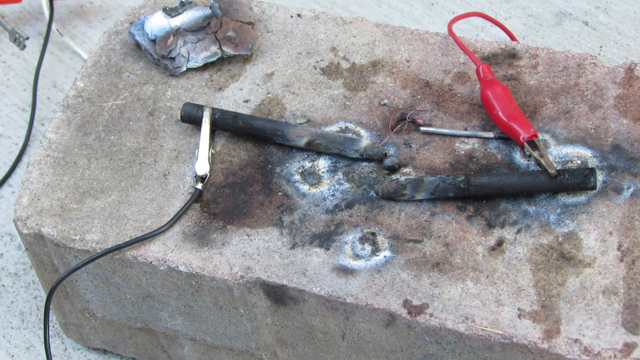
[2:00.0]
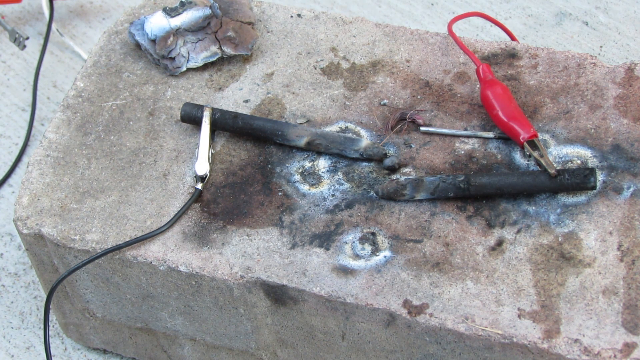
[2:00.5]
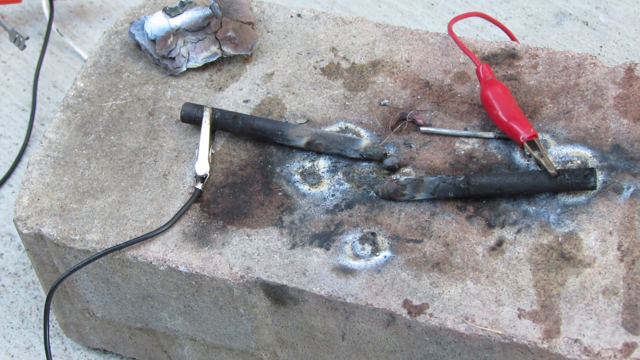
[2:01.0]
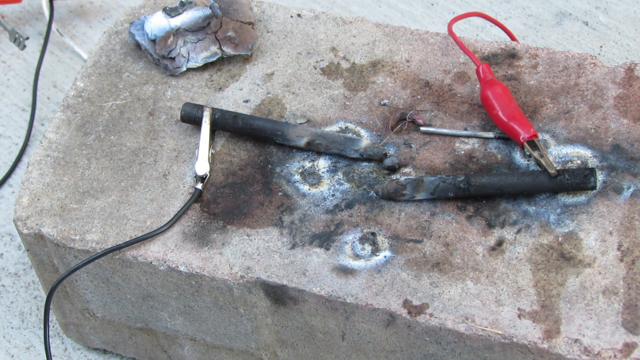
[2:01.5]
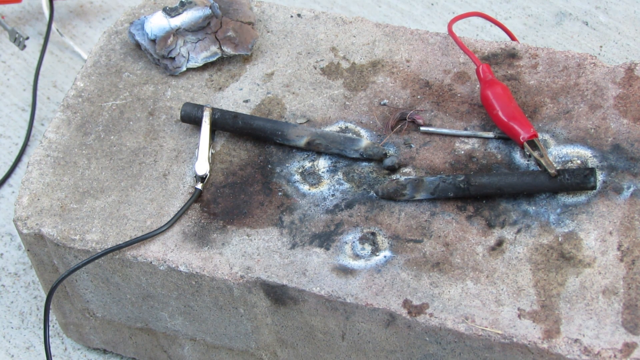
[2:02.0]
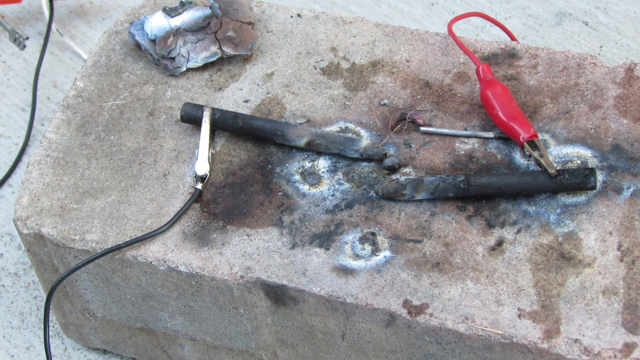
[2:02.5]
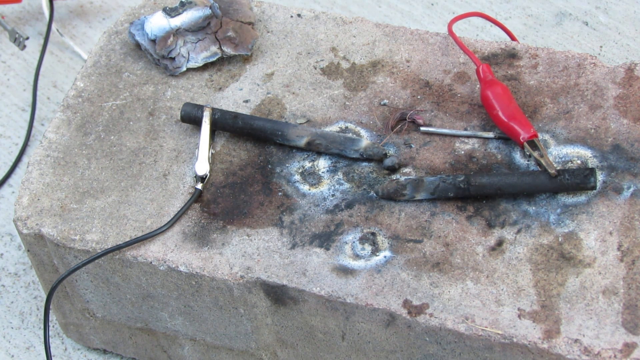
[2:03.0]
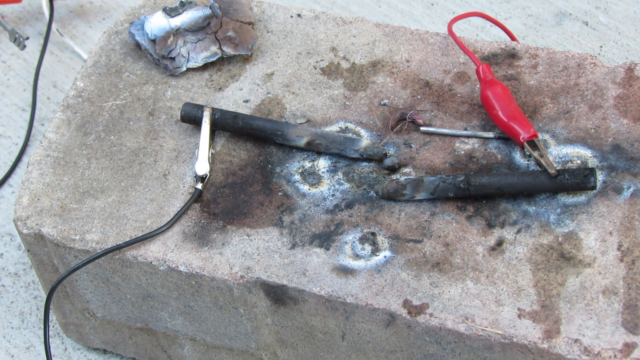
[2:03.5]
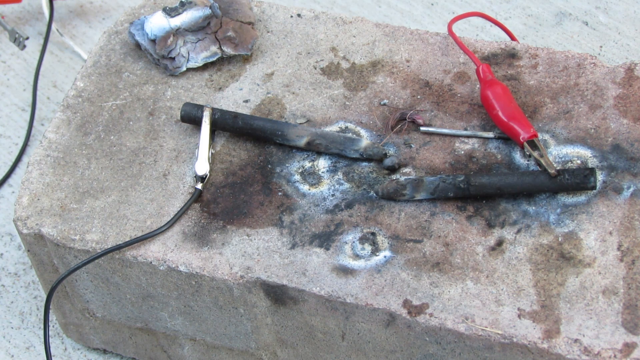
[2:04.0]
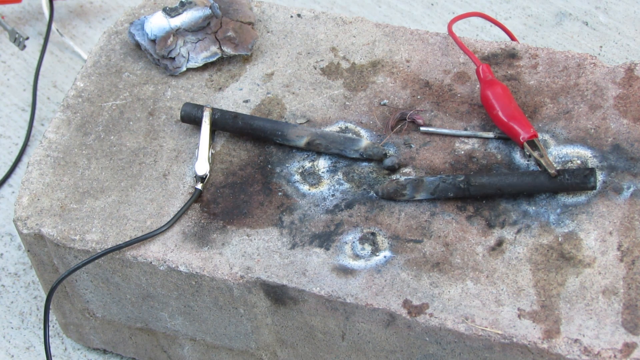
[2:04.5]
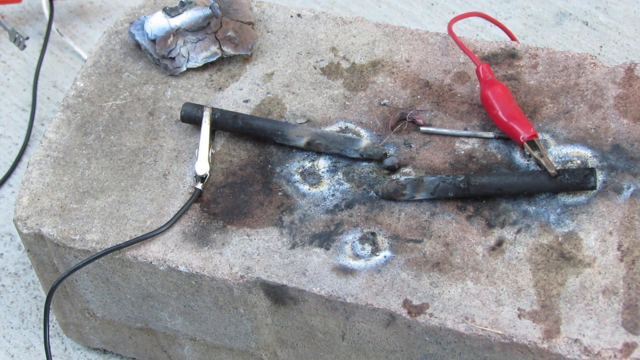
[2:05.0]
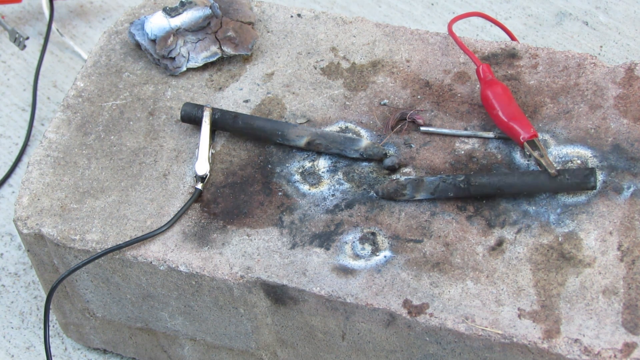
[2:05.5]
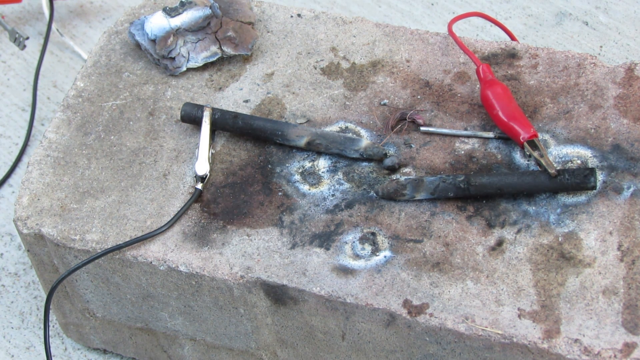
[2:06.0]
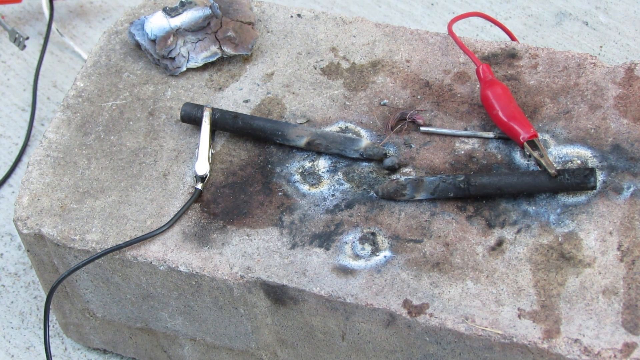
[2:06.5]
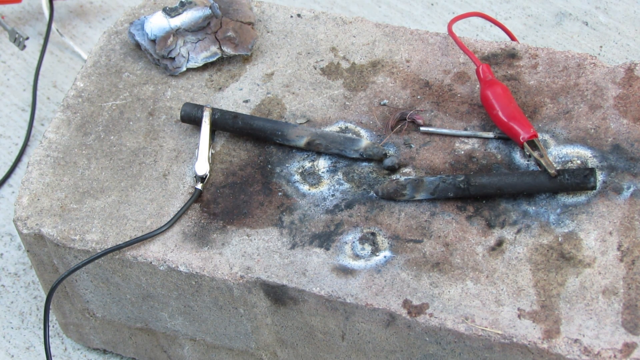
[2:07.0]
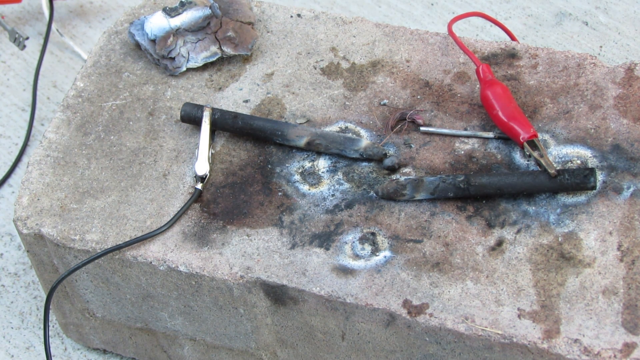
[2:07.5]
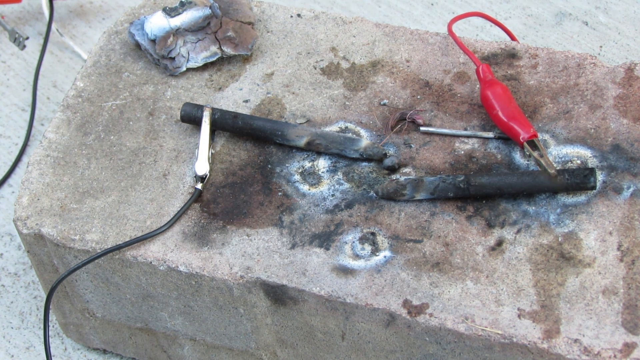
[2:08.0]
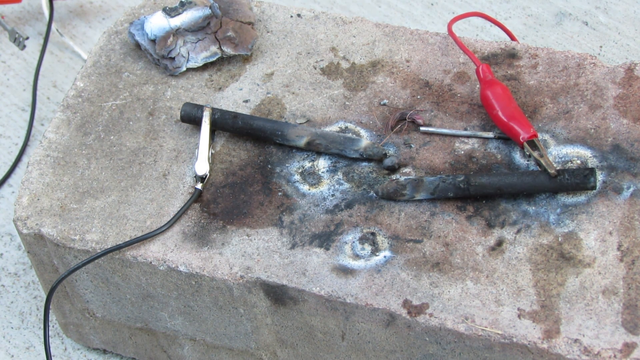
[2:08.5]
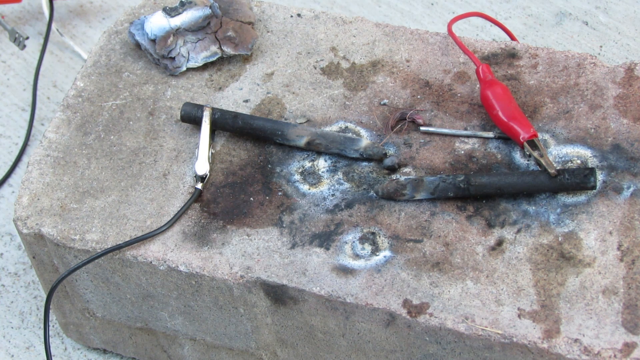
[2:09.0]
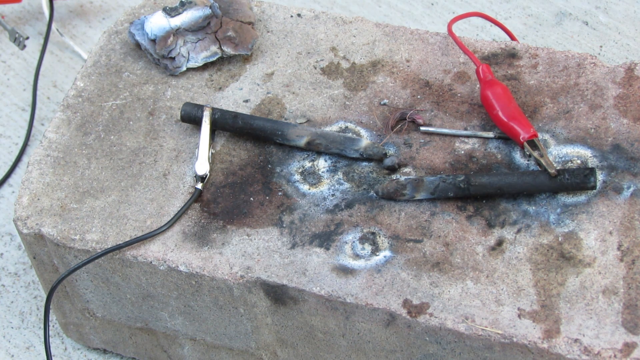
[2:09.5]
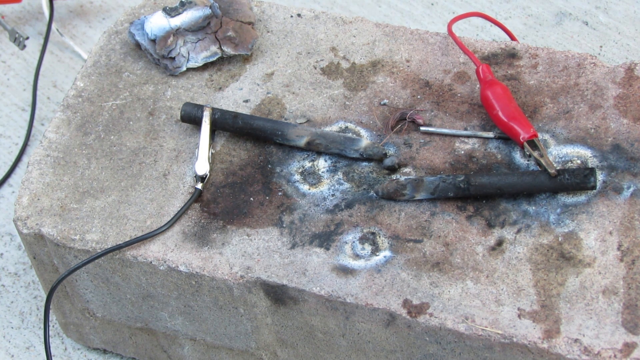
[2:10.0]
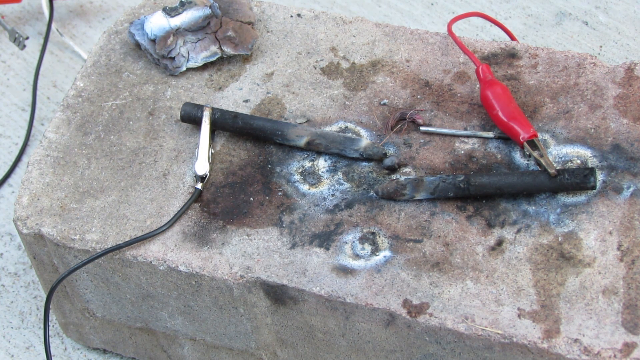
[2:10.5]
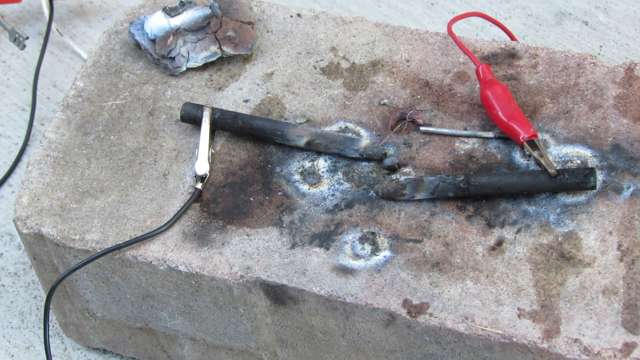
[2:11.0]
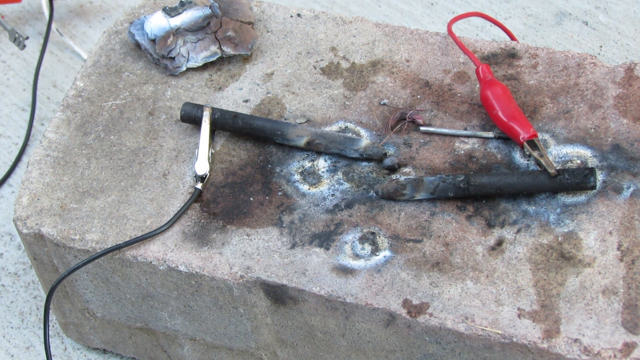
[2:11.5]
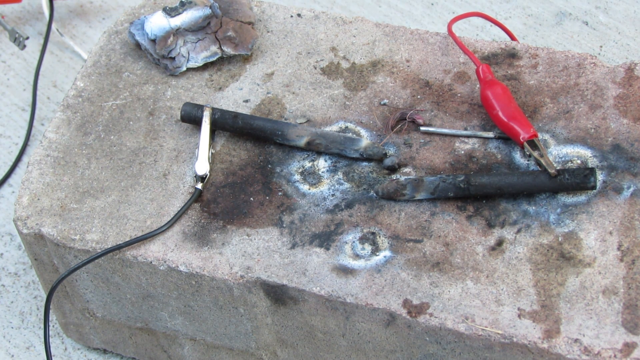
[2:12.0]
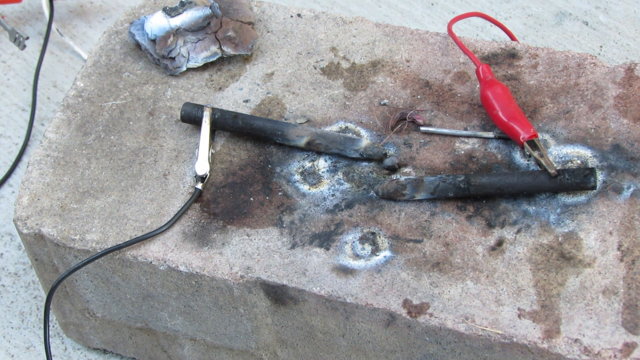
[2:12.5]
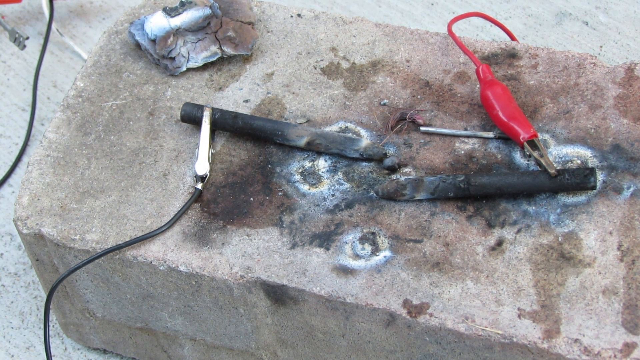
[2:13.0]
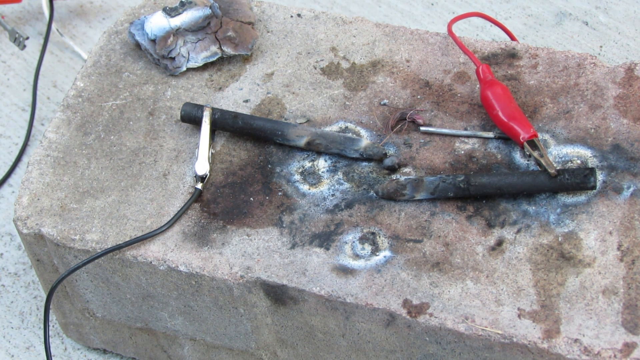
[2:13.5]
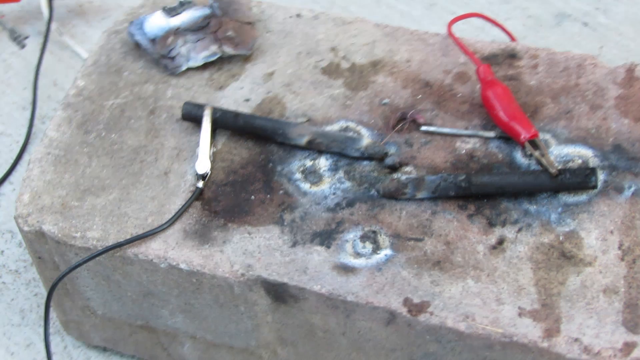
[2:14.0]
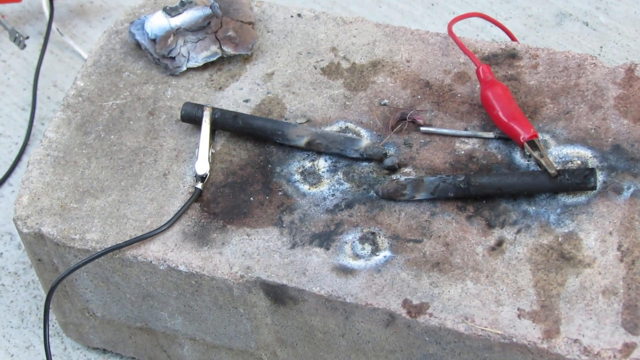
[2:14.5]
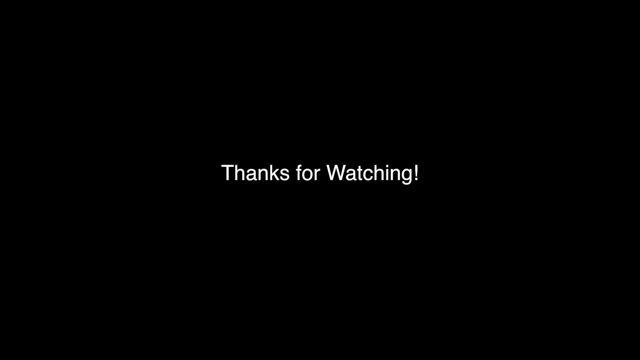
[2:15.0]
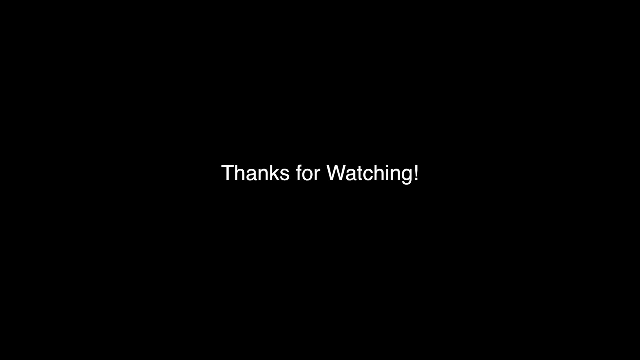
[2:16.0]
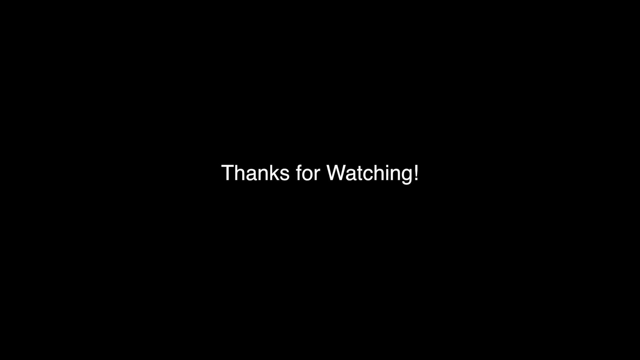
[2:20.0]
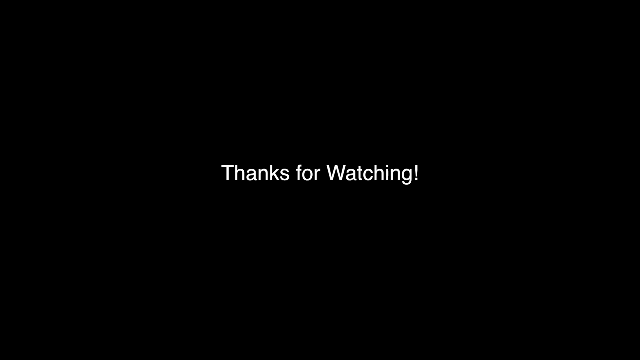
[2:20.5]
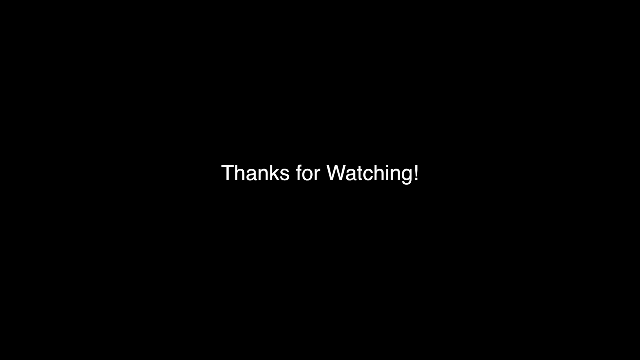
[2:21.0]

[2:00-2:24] The shot of the brick with the tools on top continues for a few more seconds. The tips of the two black cylinders are a bit burned out where the flame was between them. The red wire connected to the right cylinder is on top of the brick toward the right of the screen, and there are white and gray stains, presumably from where the flame was. A black cord is on the left of the screen. The camera apparently gets bumped, and then the screen switches to black with the words "Thanks for watching!" in white text, which ends the video.